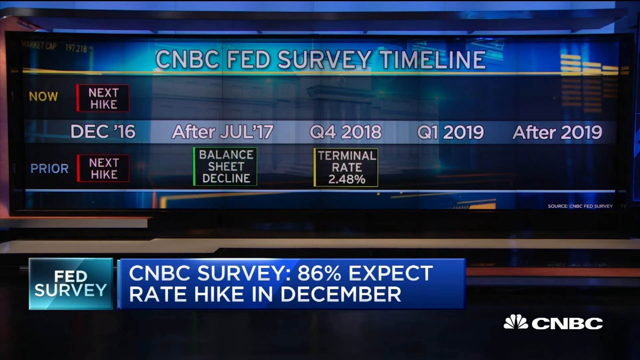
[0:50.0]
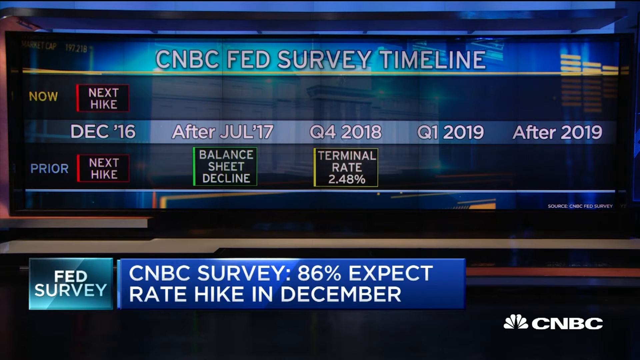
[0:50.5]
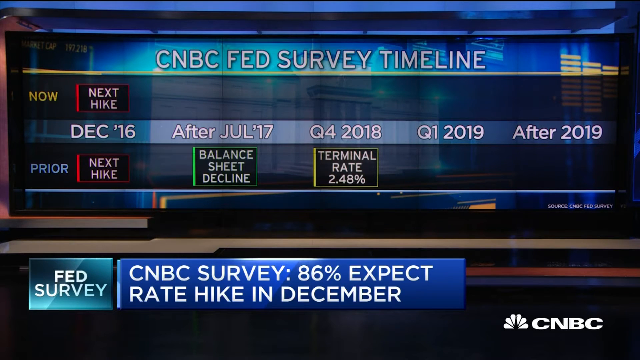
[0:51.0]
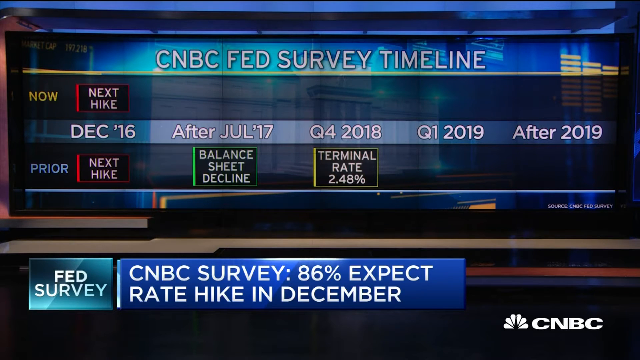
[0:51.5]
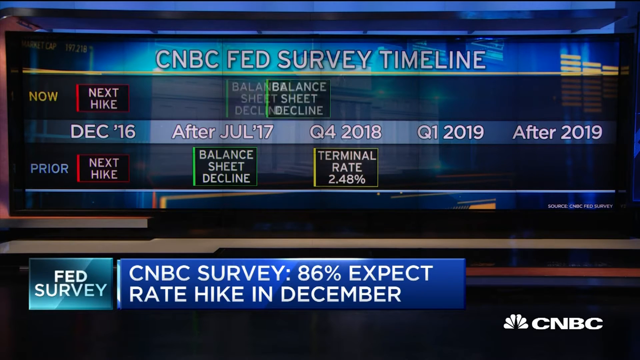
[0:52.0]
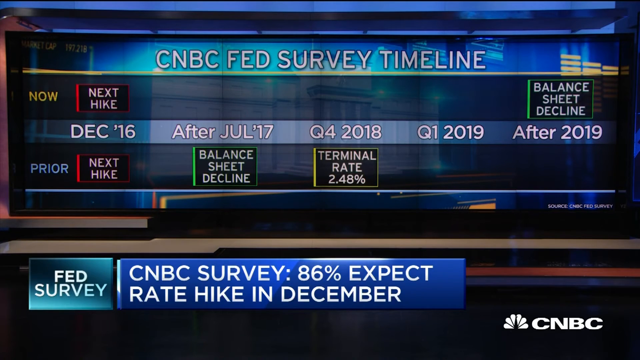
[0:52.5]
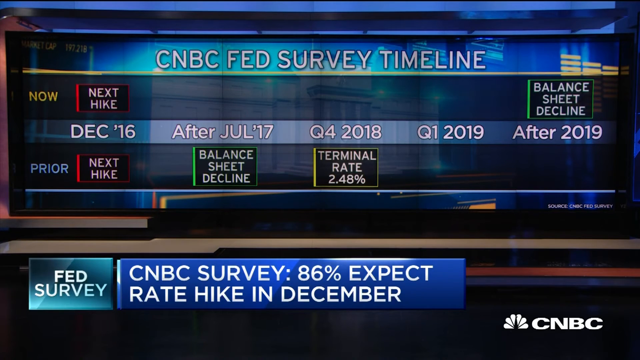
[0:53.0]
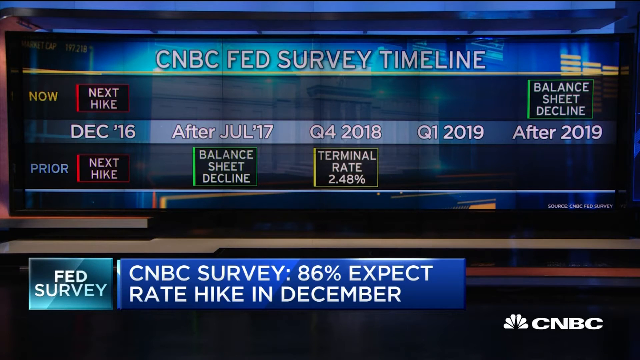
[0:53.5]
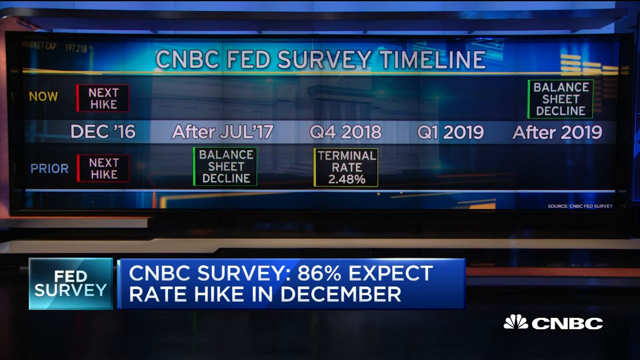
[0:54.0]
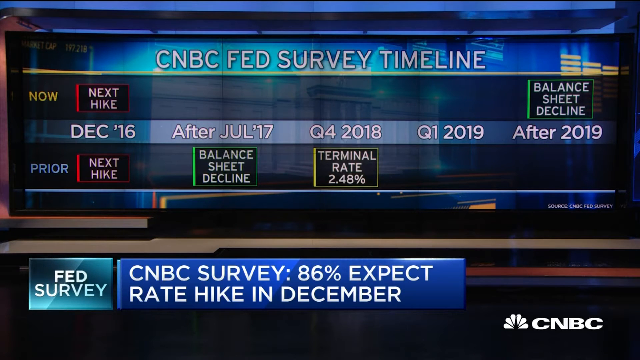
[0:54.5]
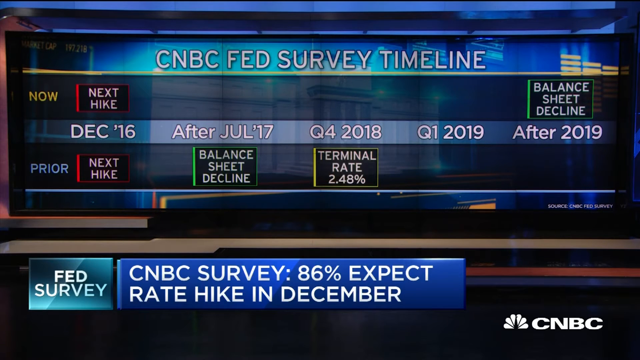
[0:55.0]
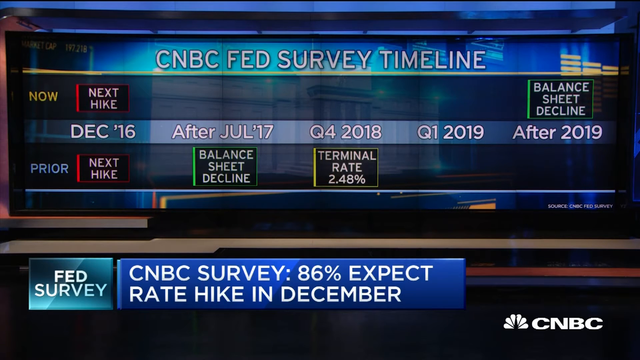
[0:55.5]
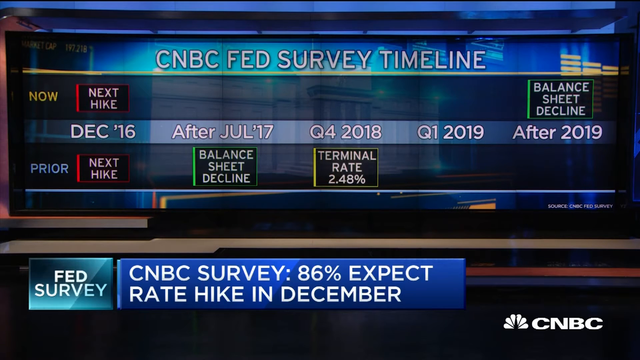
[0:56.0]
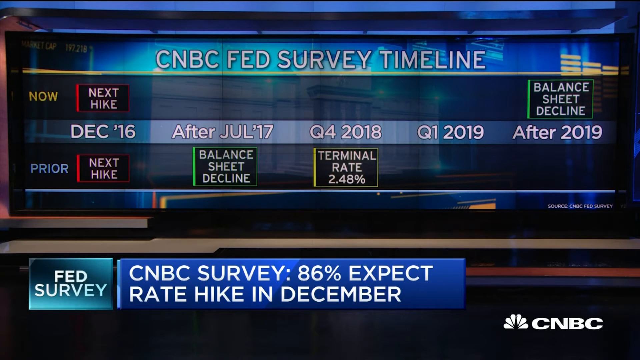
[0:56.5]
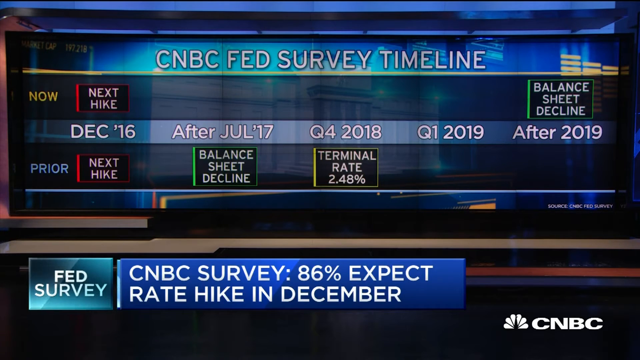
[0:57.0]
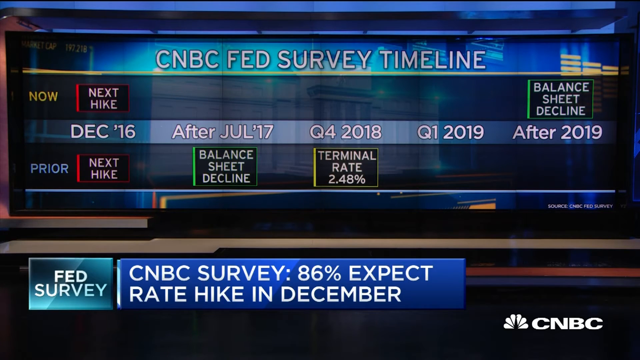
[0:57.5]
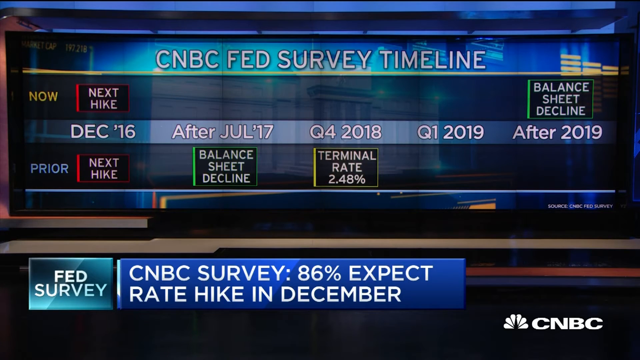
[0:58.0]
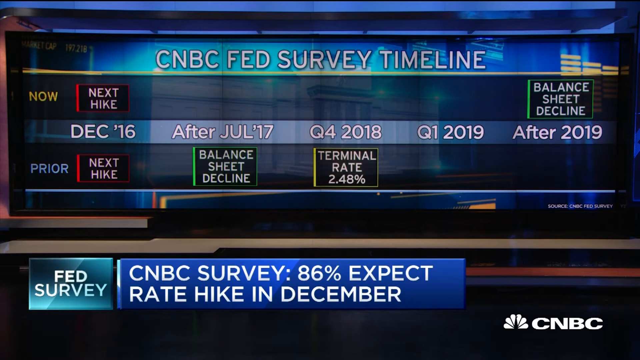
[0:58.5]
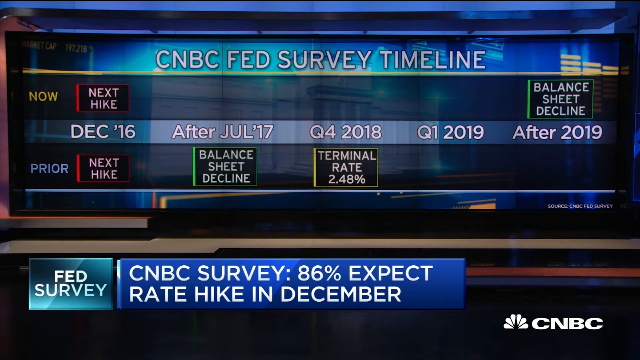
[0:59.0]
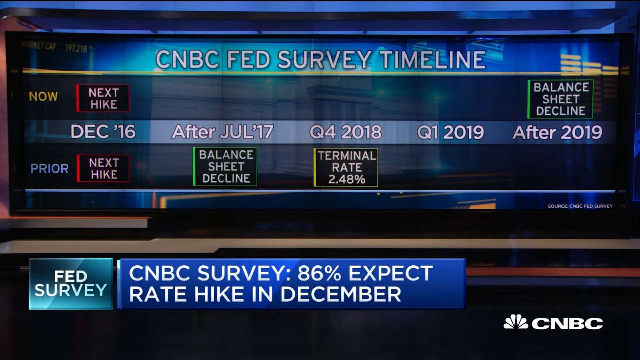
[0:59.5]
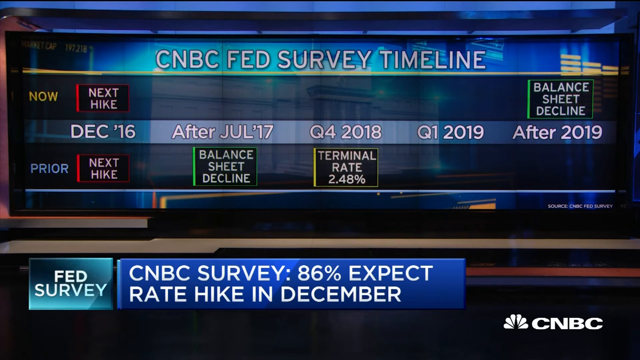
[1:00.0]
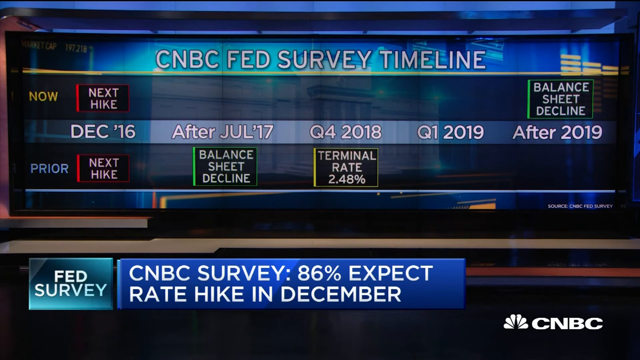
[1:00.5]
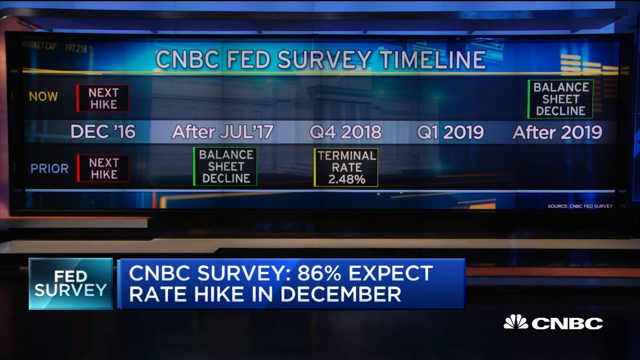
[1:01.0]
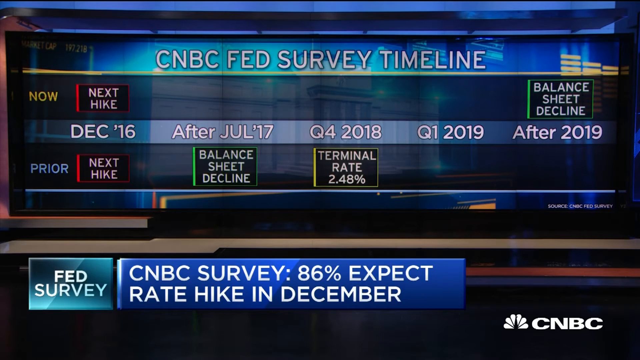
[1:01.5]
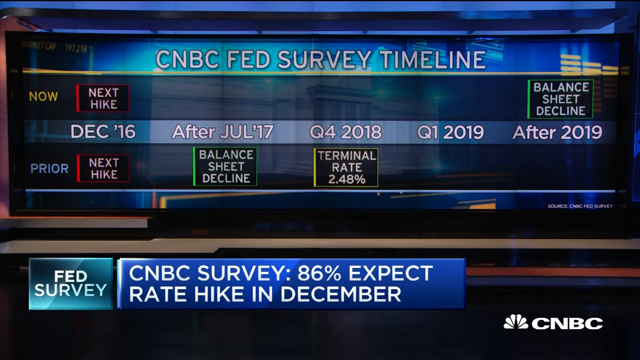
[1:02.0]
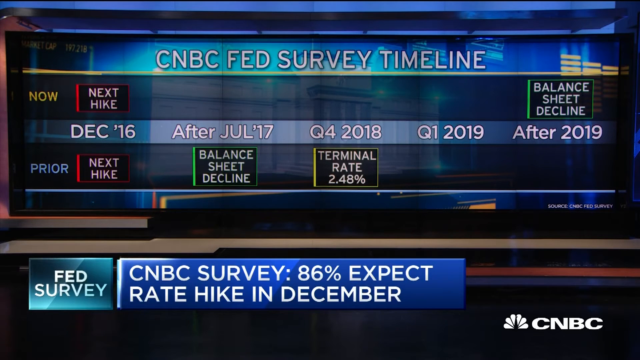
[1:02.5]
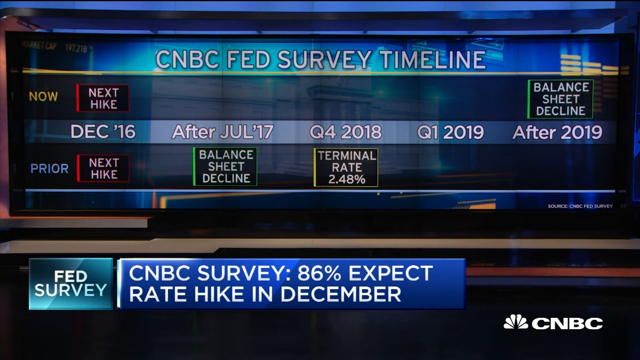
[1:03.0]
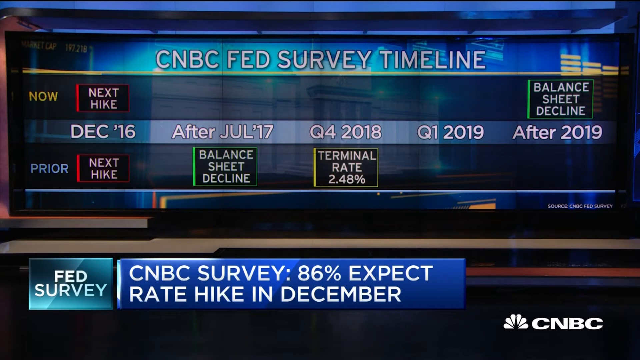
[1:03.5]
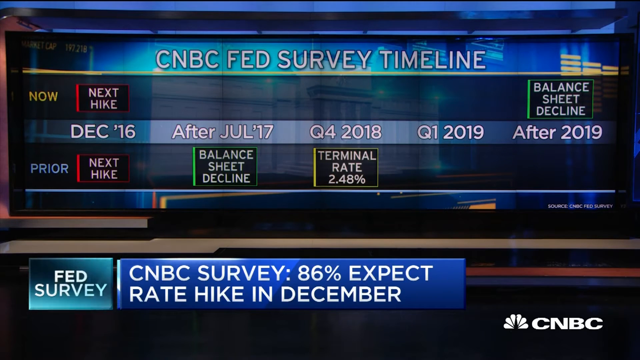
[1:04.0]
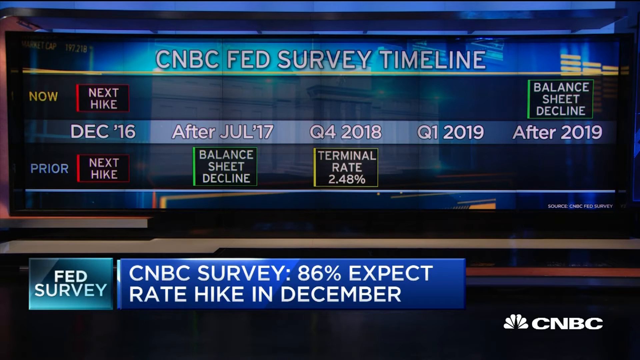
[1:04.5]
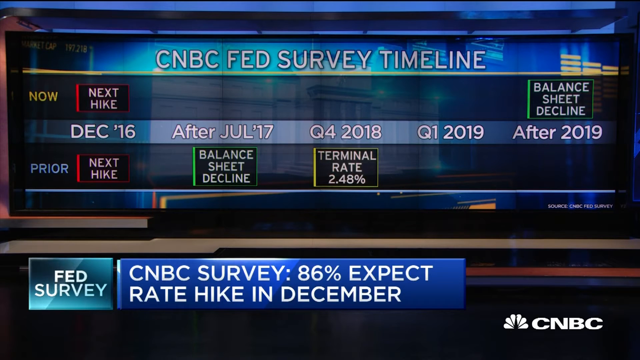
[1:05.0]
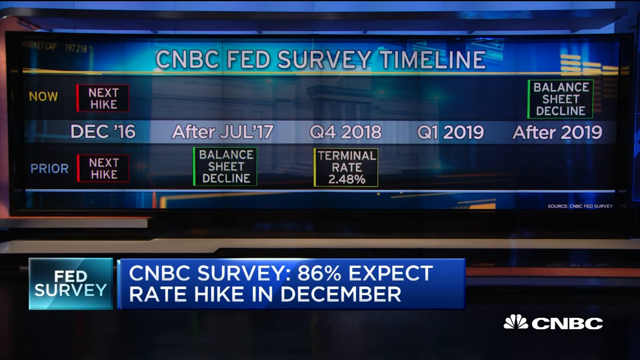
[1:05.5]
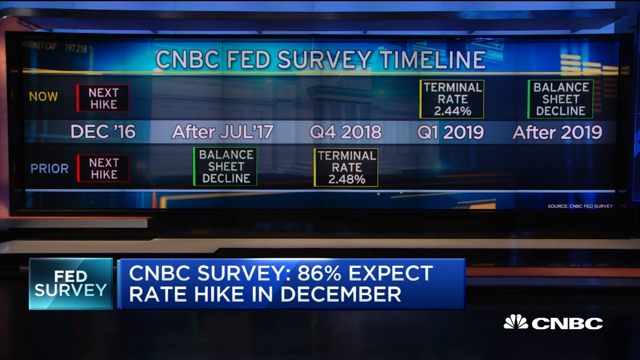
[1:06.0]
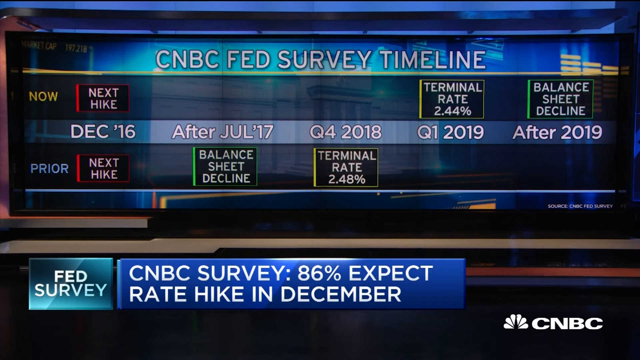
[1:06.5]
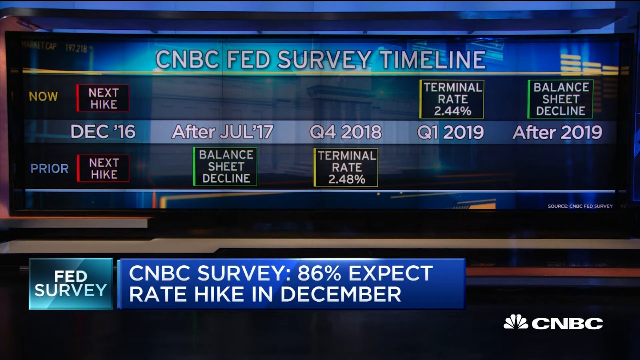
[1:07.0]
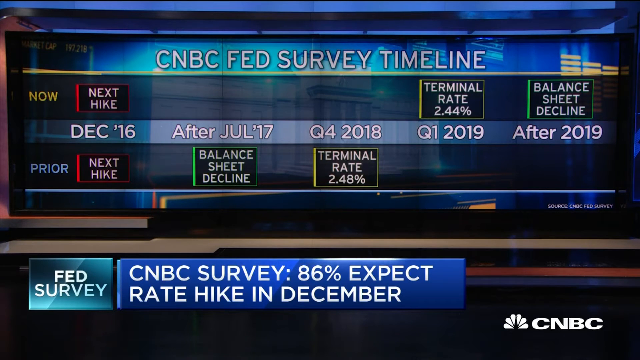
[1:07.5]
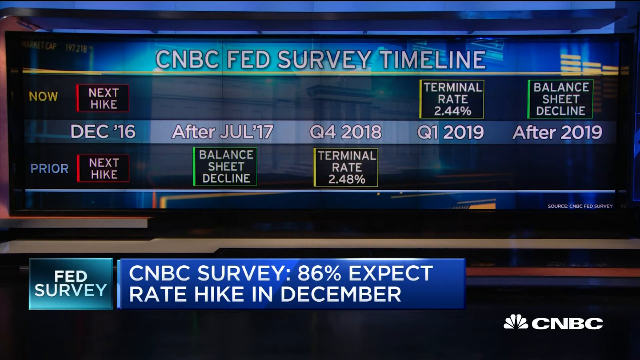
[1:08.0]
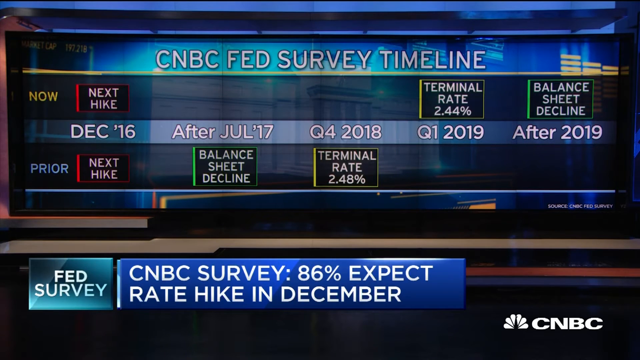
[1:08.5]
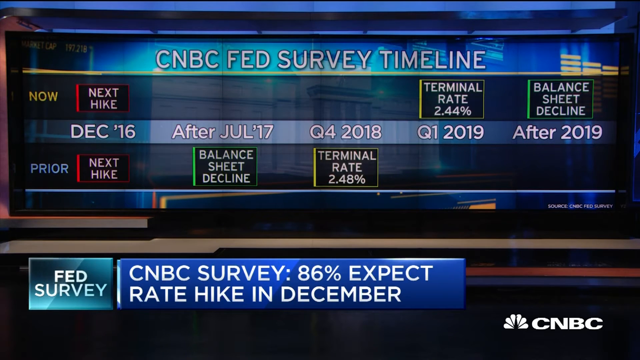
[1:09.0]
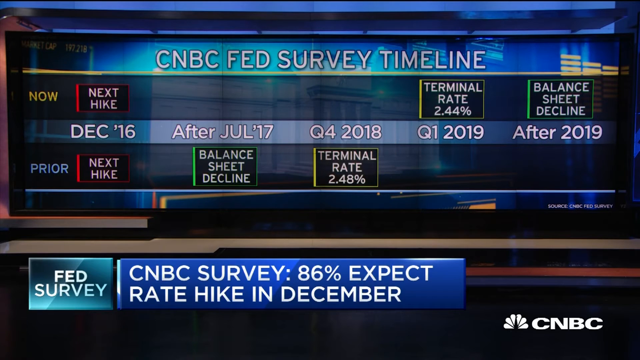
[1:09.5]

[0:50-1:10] The "CNBC Fed Survey Timeline" shows "now" in yellow, with a row for next hike, terminal rate 2.44, and balance sheet decline. Below that are "December 16", "after July 17", "Q4 2018", "Q1 2019", and "after 2019". Below that are "prior", next hike, balance sheet decline, and "terminal rate 2.48%". A line reads "CNBC Survey" with "86% expect rate hike in December".